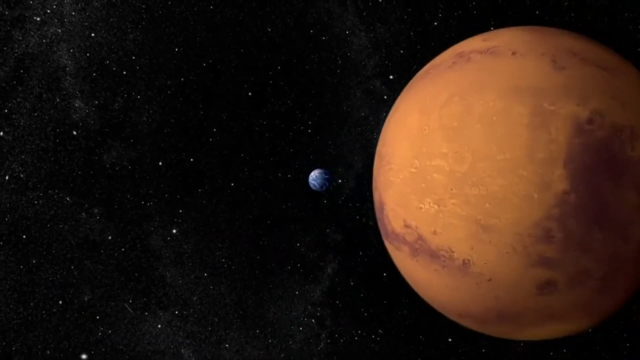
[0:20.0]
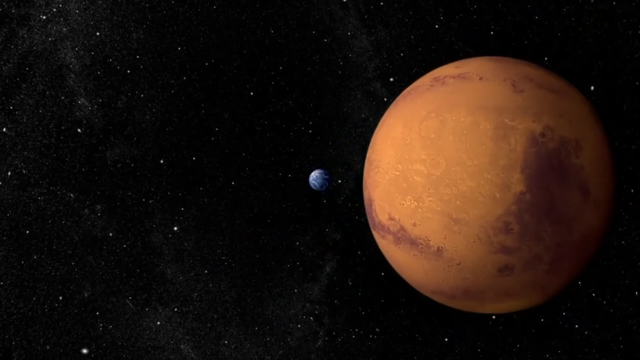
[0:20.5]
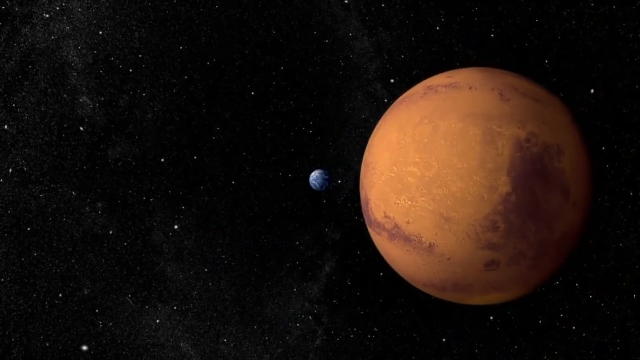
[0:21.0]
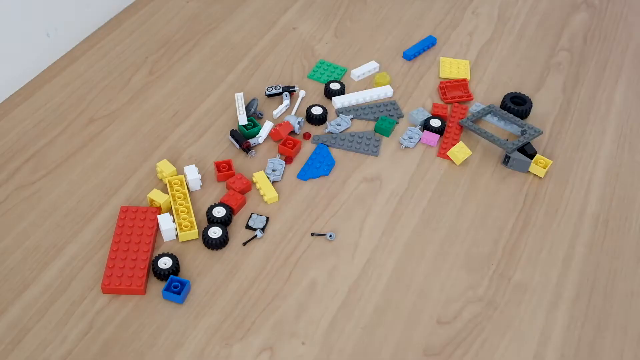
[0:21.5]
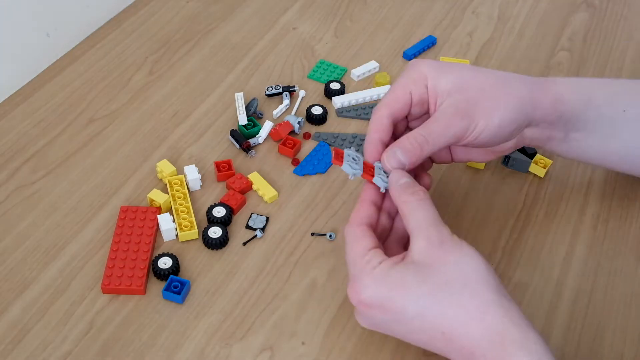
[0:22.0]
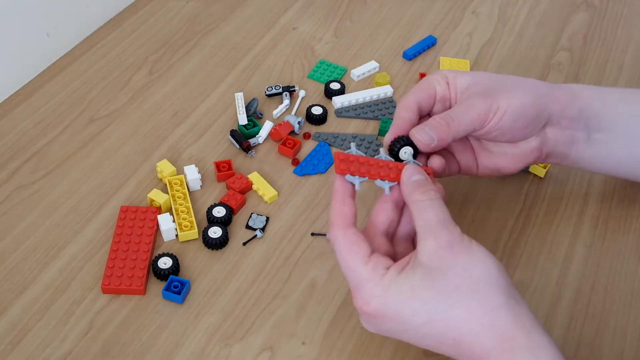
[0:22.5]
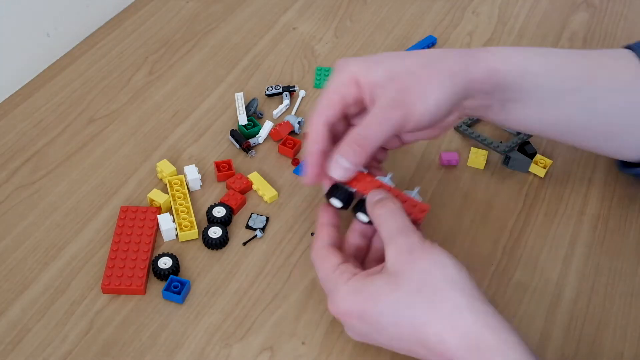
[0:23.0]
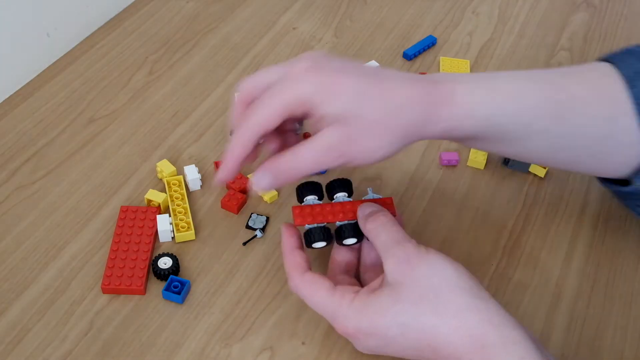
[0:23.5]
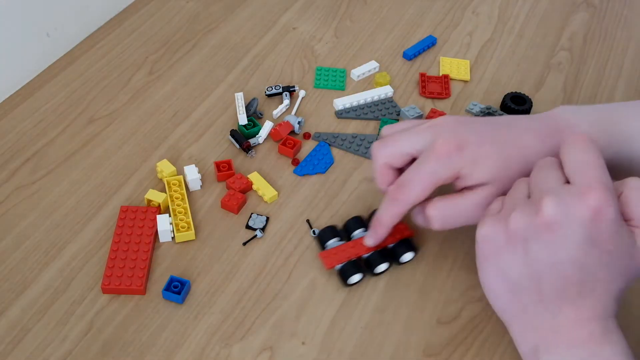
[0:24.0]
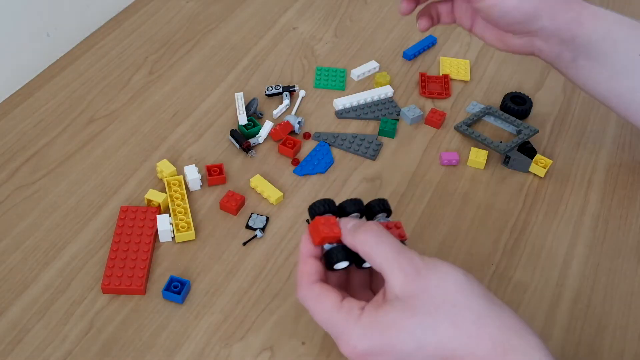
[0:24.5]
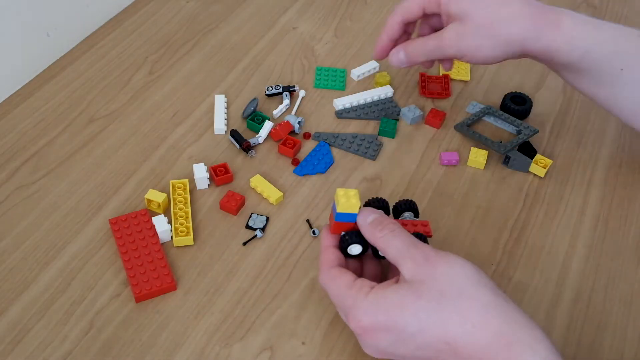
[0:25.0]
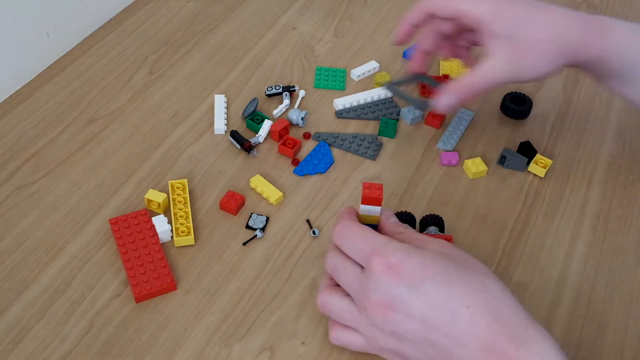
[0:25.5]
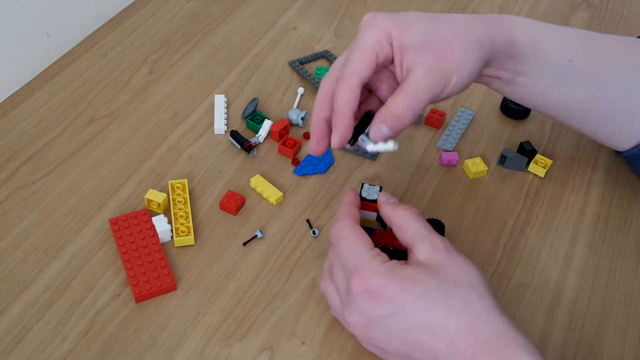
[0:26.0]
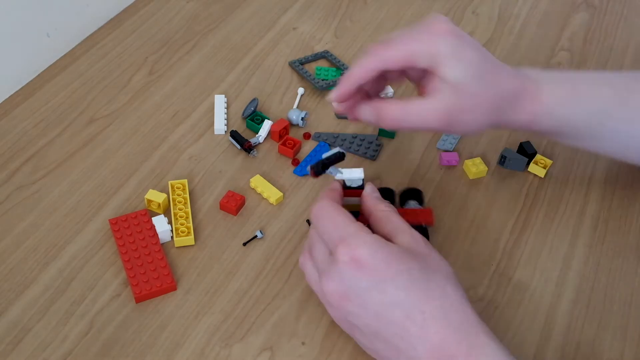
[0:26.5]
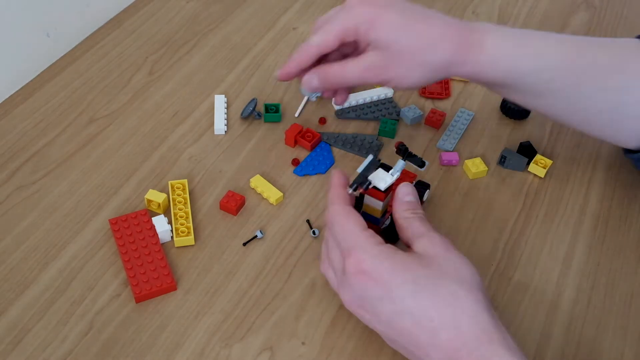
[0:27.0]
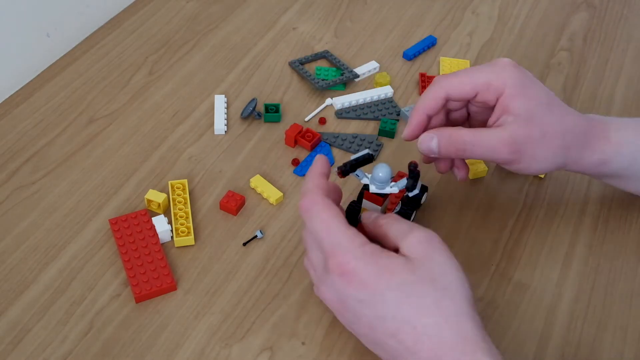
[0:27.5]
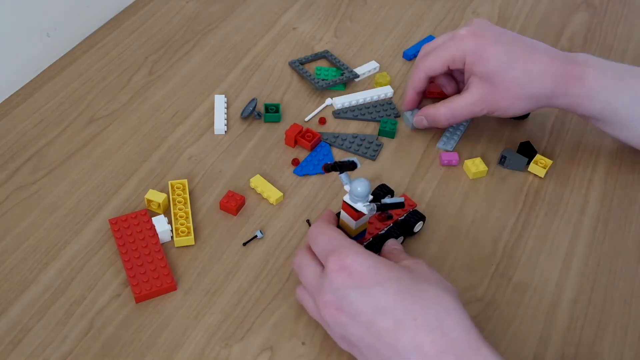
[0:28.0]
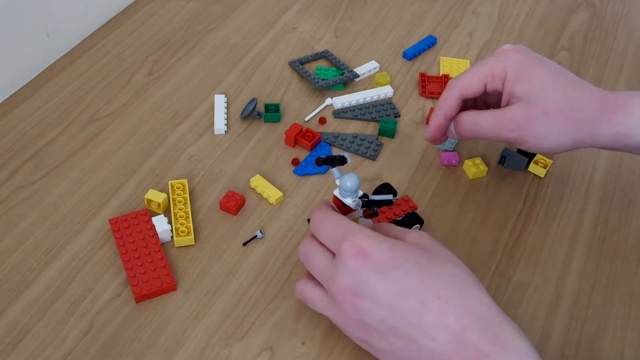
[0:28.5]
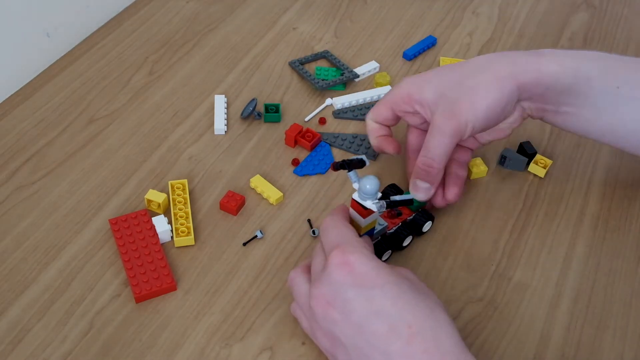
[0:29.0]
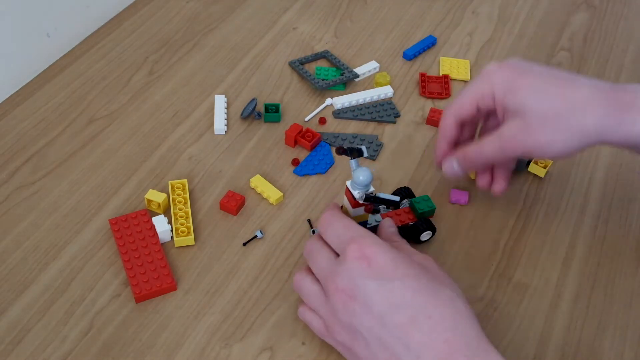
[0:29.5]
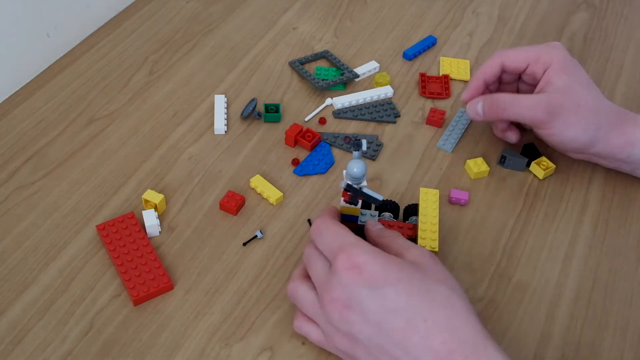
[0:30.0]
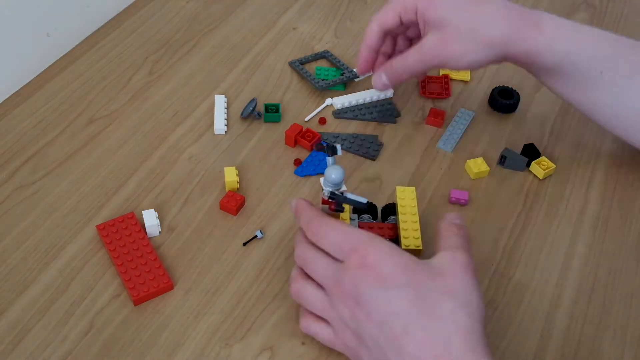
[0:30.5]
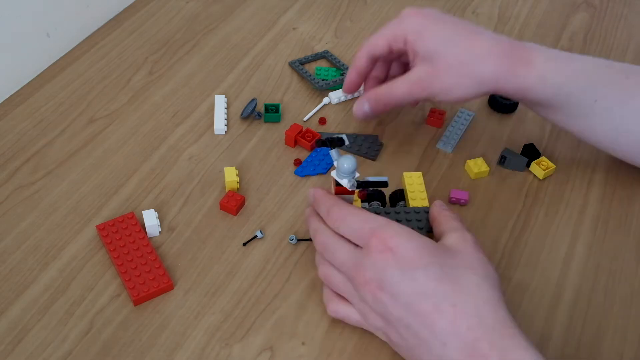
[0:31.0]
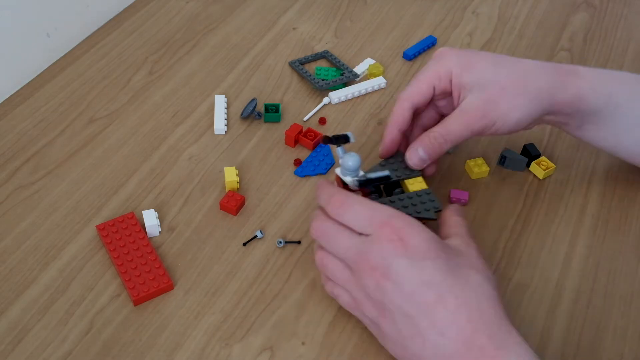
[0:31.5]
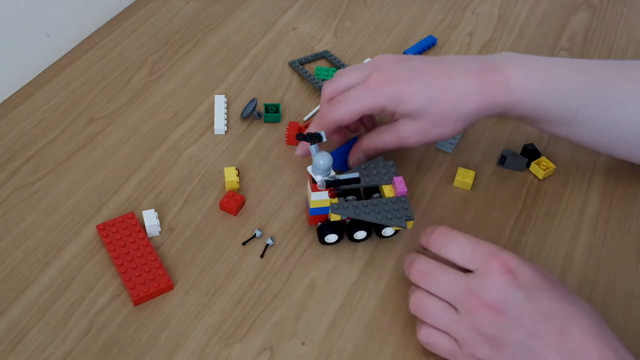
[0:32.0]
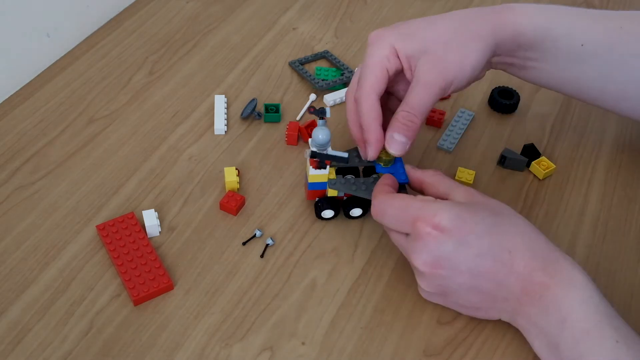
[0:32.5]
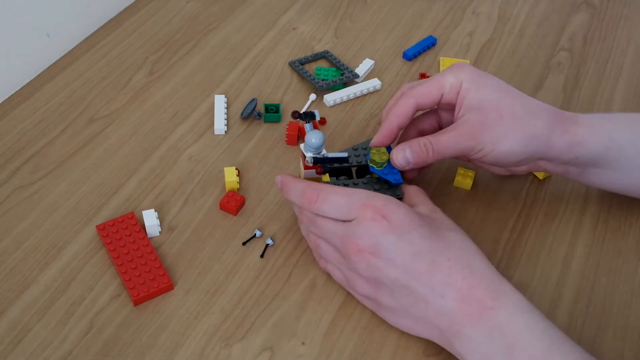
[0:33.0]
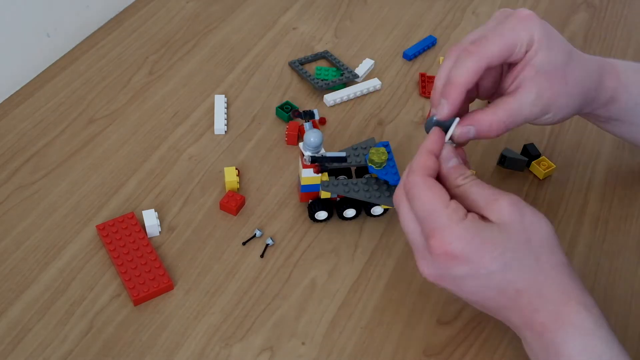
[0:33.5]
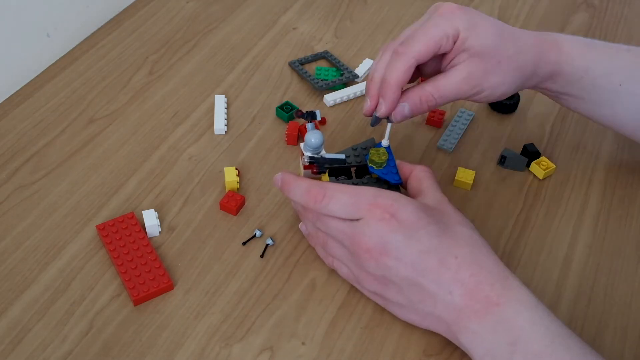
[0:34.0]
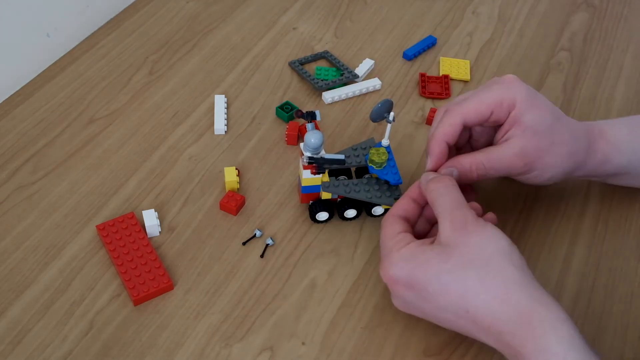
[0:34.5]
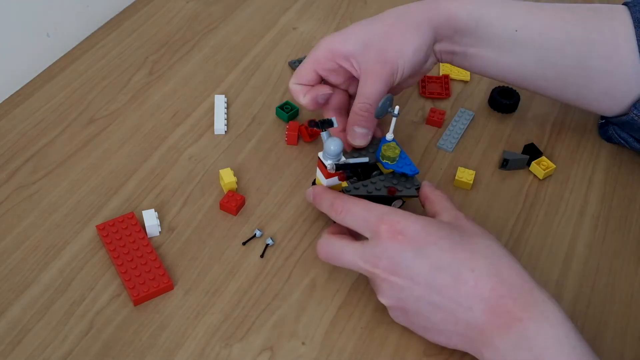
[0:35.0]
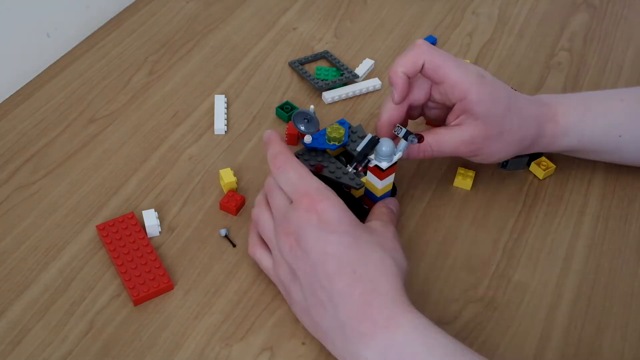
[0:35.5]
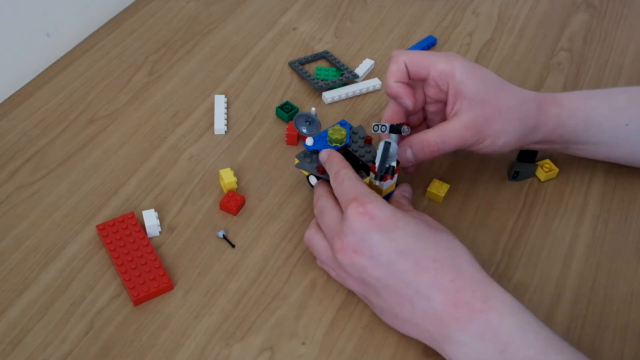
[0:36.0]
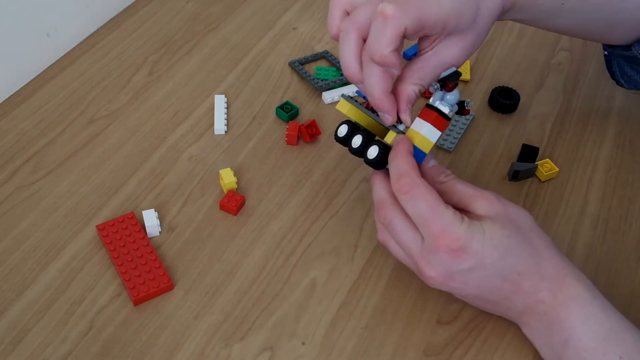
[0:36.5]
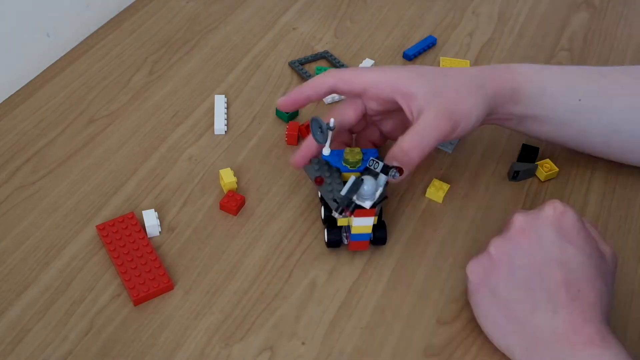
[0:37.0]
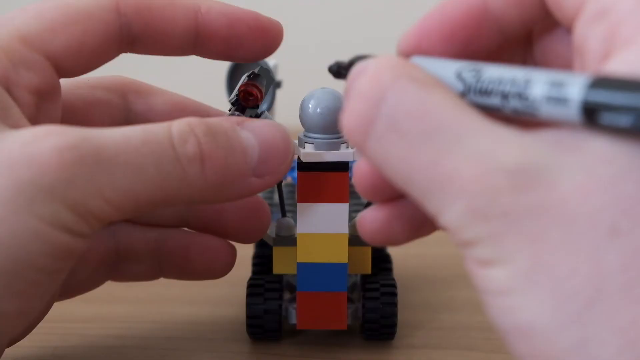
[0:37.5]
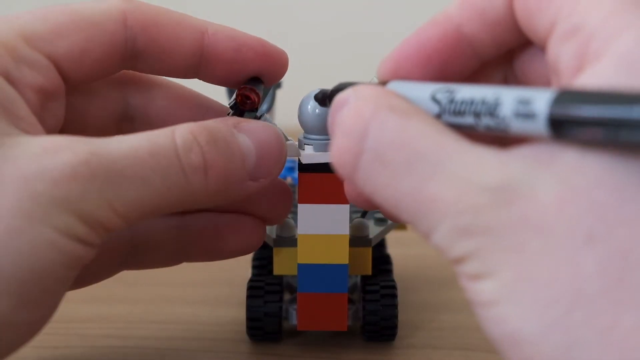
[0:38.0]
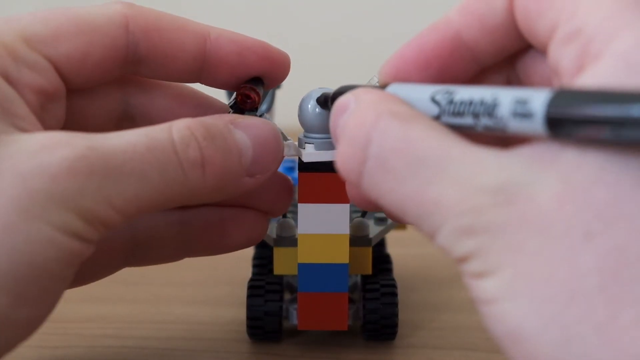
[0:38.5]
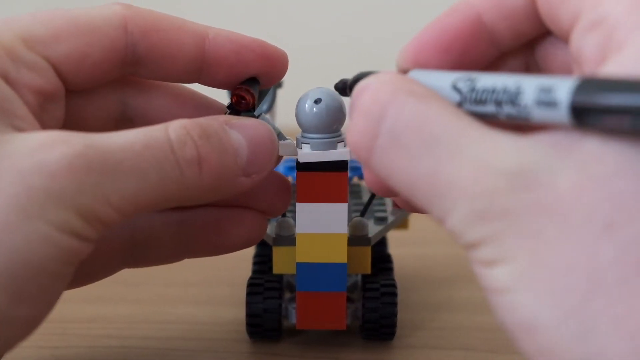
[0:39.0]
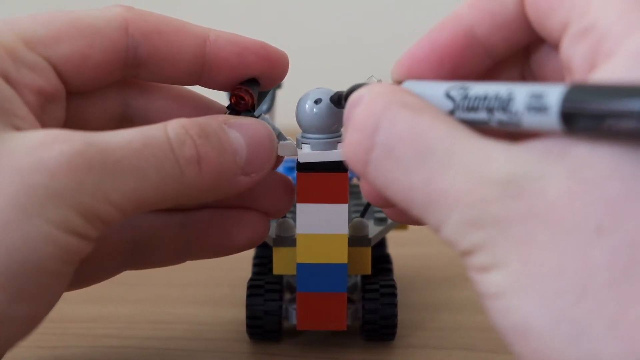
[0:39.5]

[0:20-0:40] Earth is off in the distance, with another planet more toward the right. The Earth is mostly blue with a little bit of green, and the other planet is mostly orange with a few red streaks. Someone then quickly puts Legos together, building what looks like maybe an astronaut who might be going on a device or vehicle out into space. The building is shown in very fast, sped-up motion. As the figure is finished, the person puts eyes on it, kind of making a face; the build looks kind of like a satellite robot that could maybe be in outer space as well.